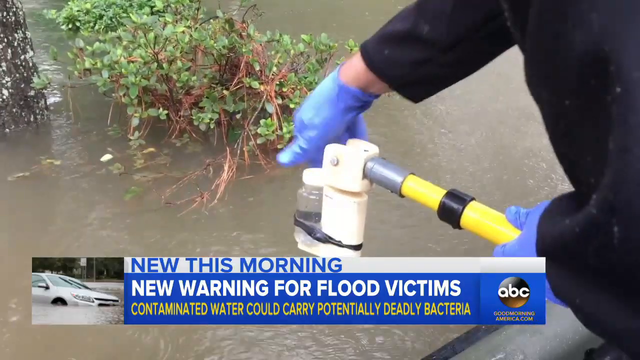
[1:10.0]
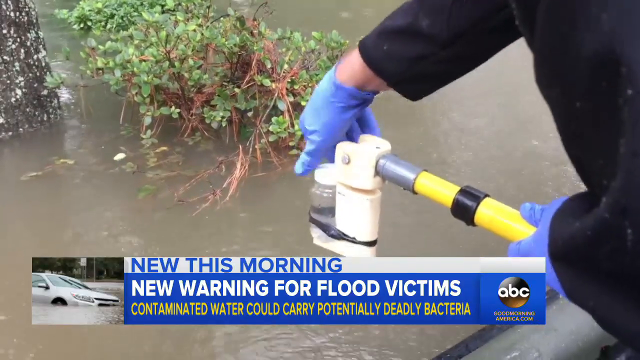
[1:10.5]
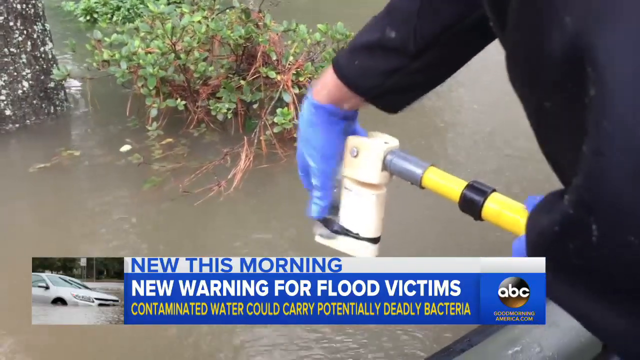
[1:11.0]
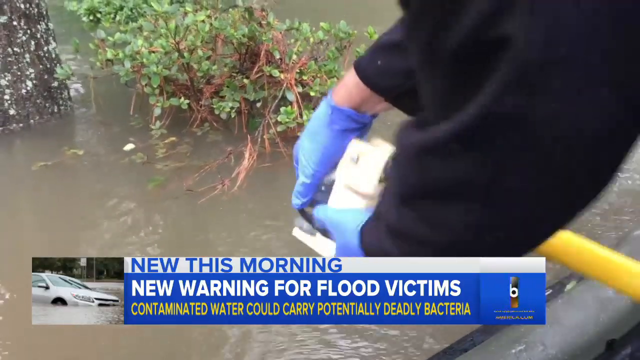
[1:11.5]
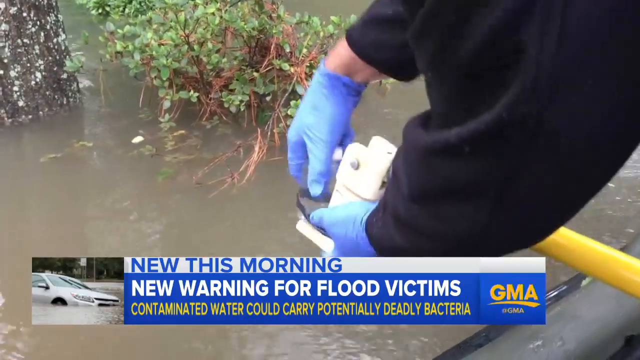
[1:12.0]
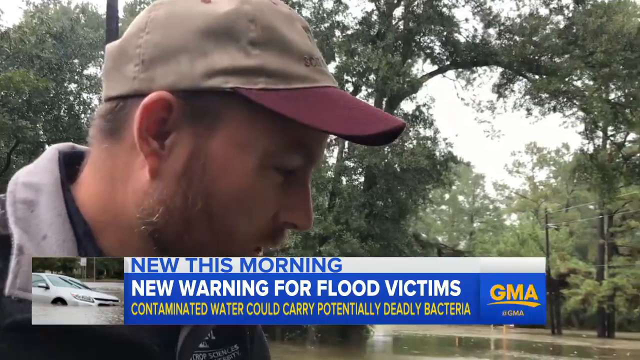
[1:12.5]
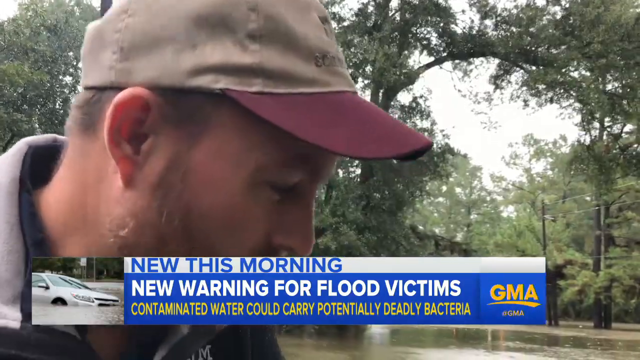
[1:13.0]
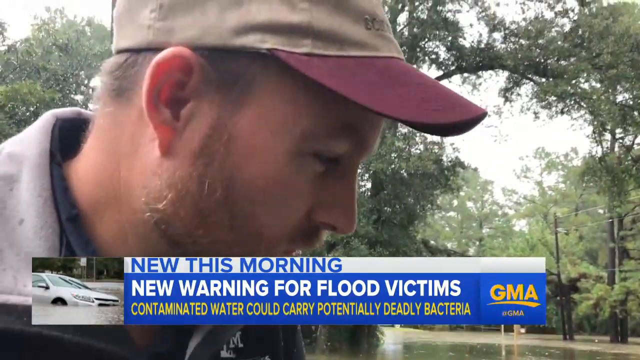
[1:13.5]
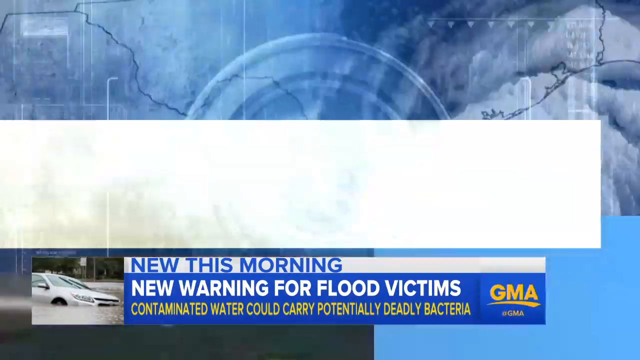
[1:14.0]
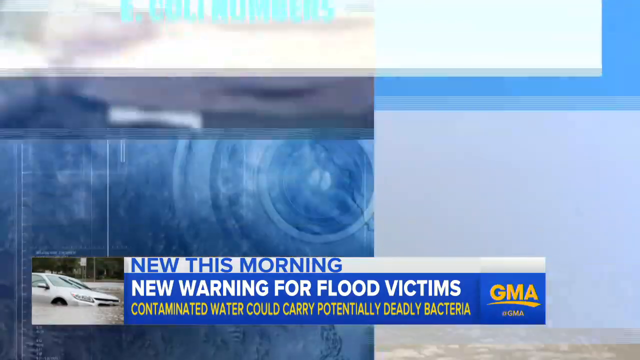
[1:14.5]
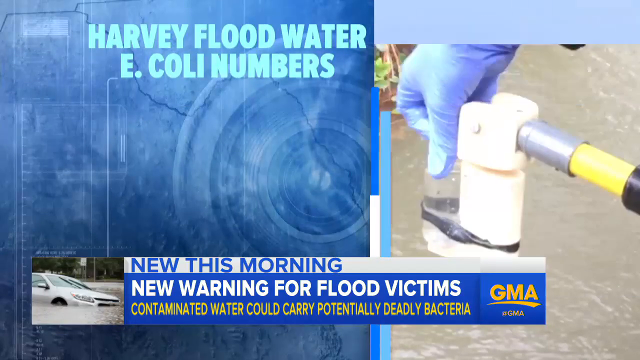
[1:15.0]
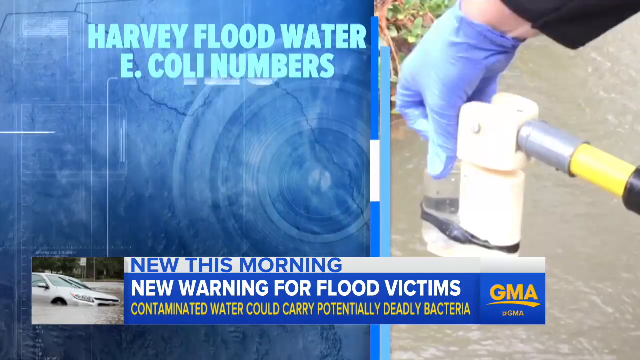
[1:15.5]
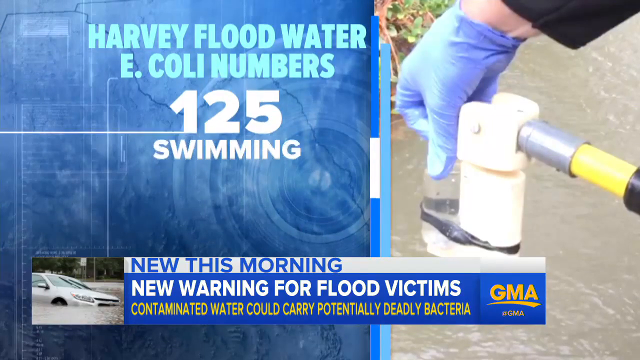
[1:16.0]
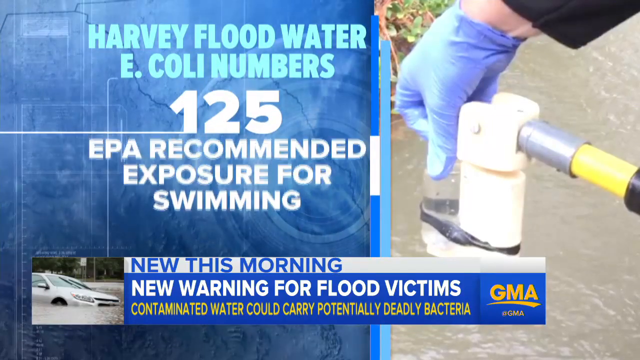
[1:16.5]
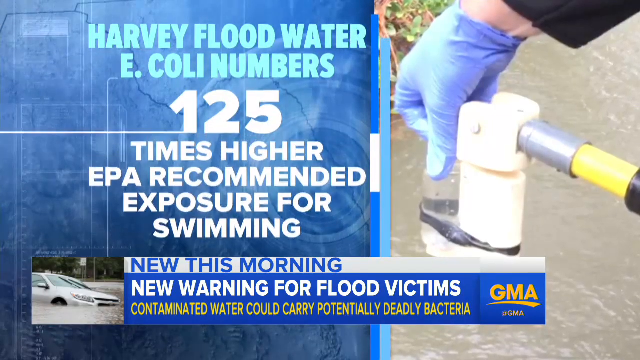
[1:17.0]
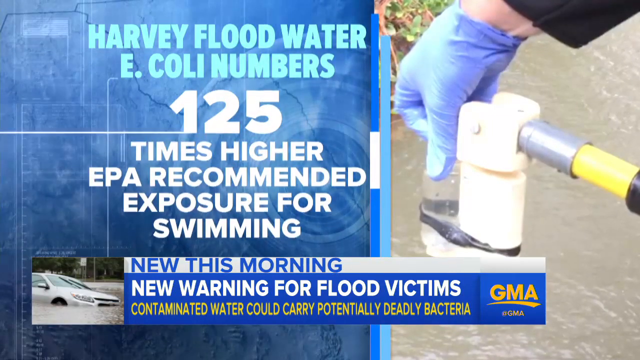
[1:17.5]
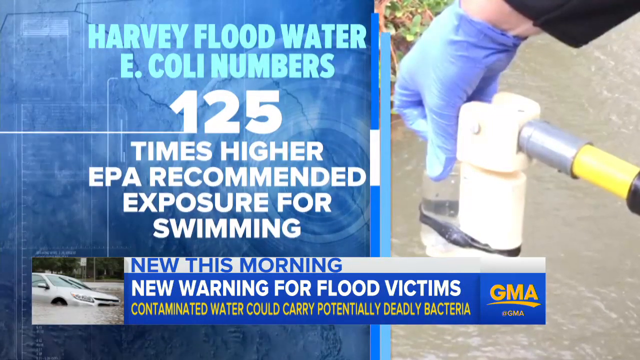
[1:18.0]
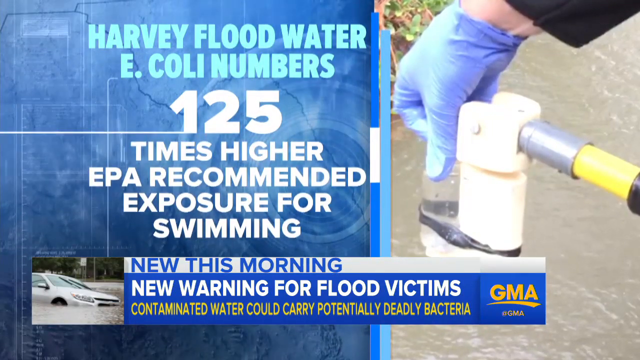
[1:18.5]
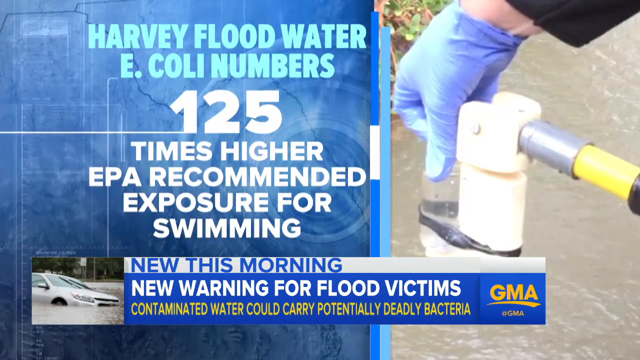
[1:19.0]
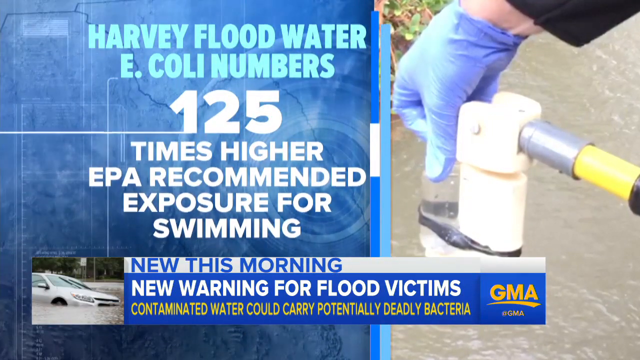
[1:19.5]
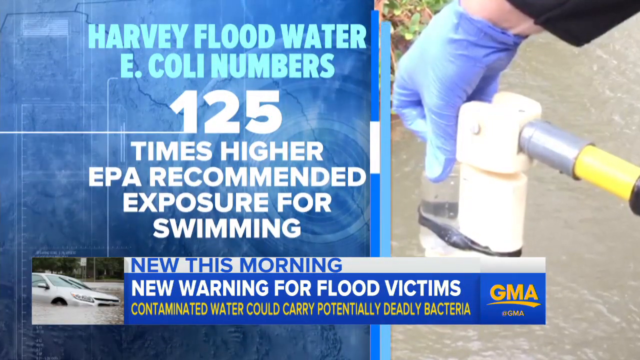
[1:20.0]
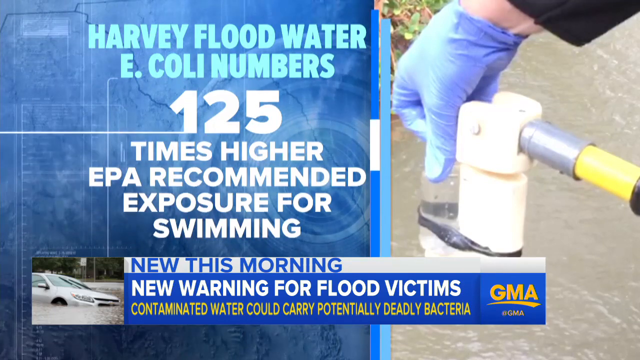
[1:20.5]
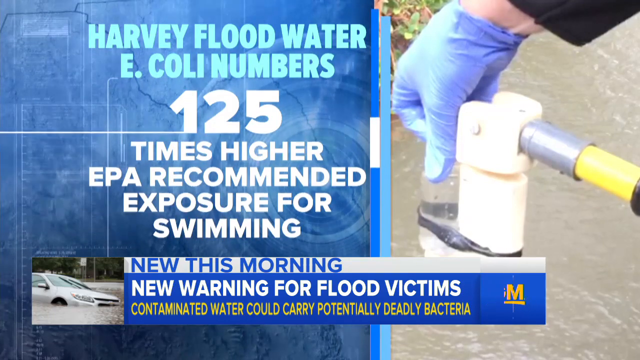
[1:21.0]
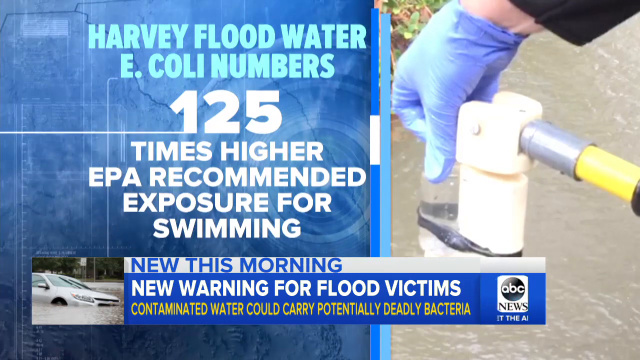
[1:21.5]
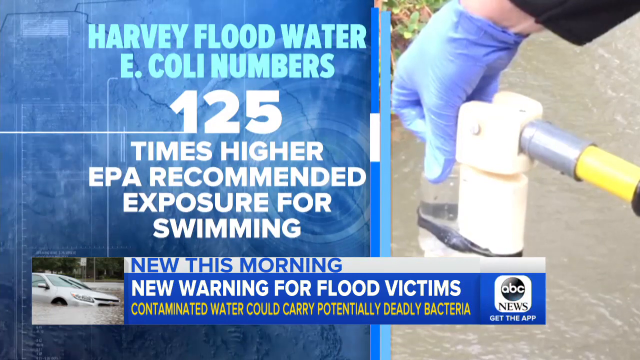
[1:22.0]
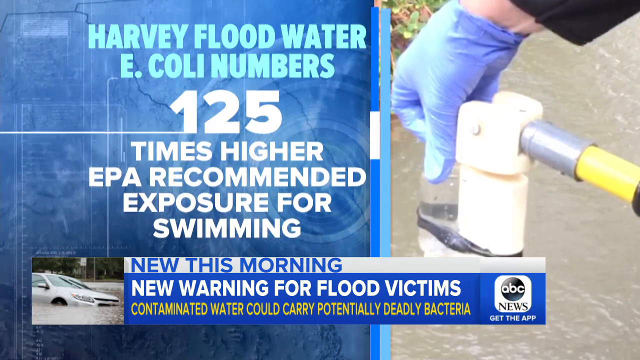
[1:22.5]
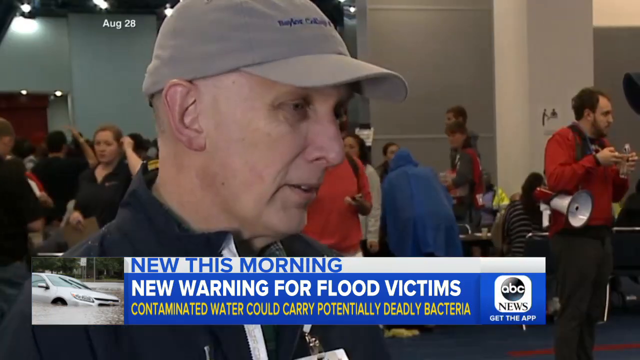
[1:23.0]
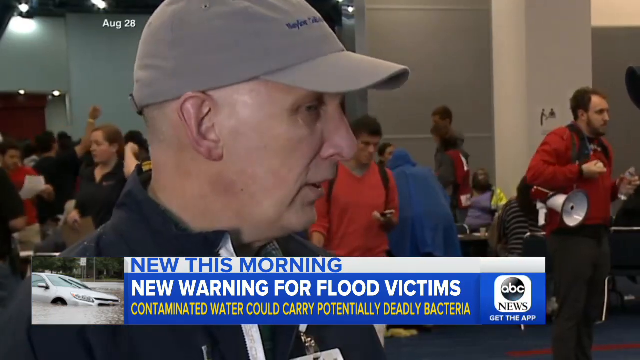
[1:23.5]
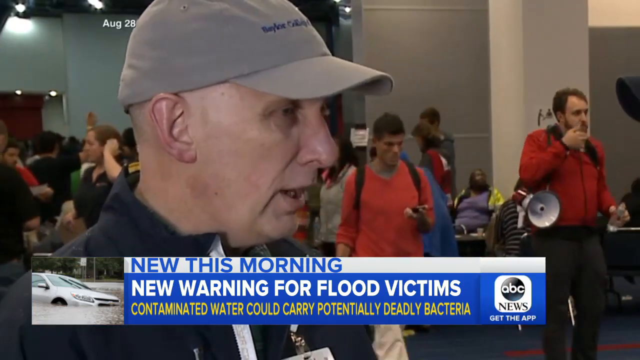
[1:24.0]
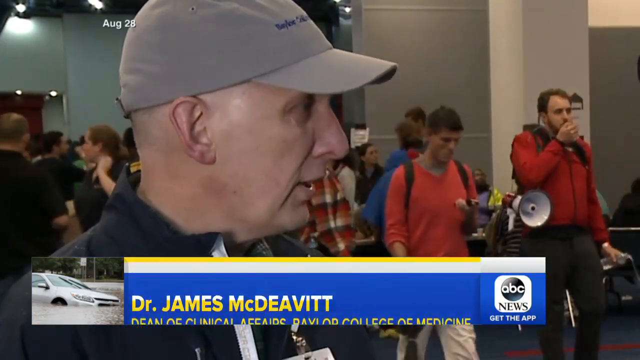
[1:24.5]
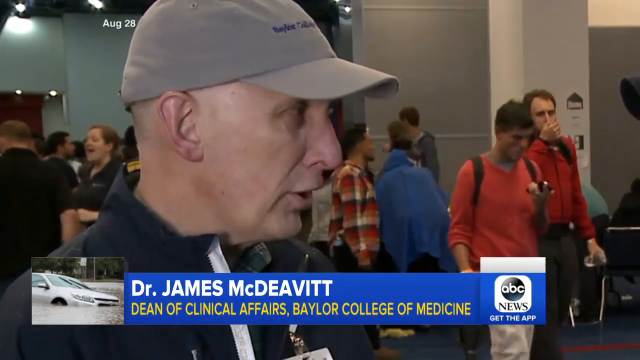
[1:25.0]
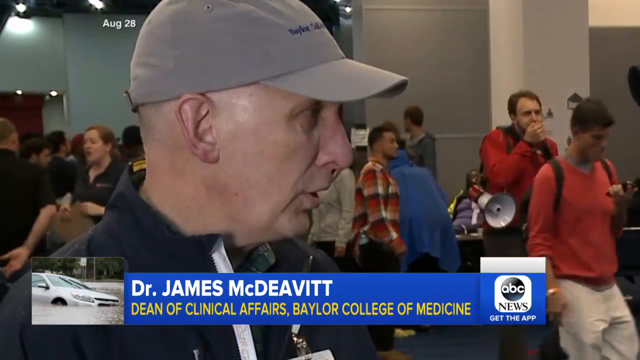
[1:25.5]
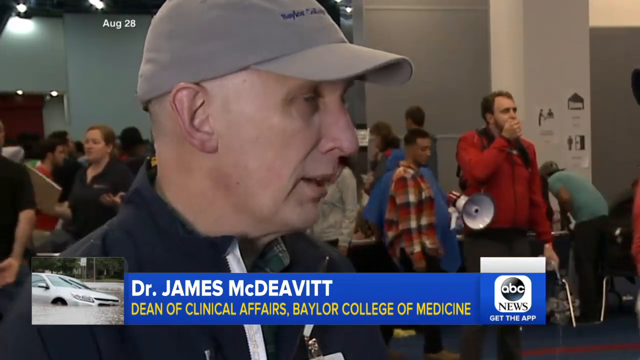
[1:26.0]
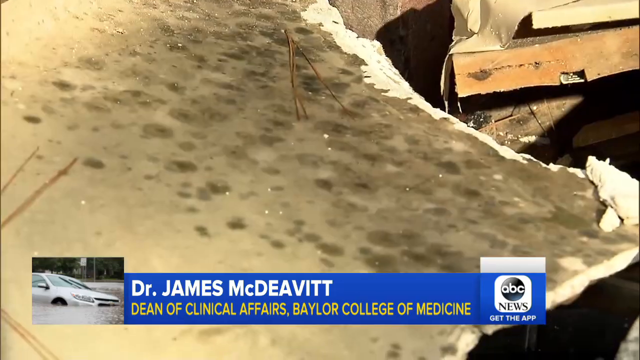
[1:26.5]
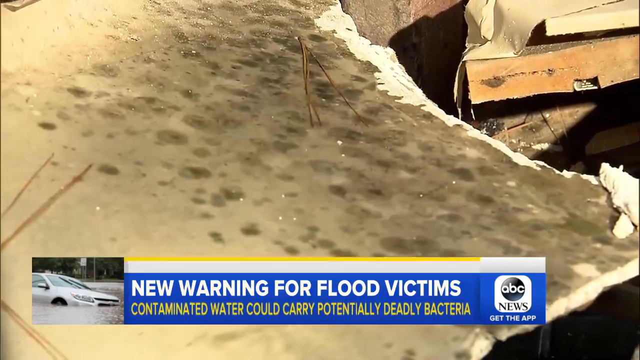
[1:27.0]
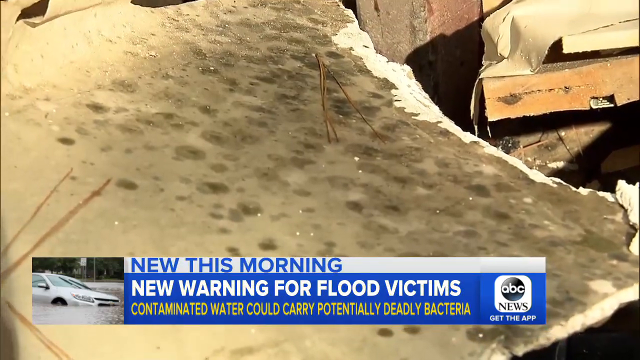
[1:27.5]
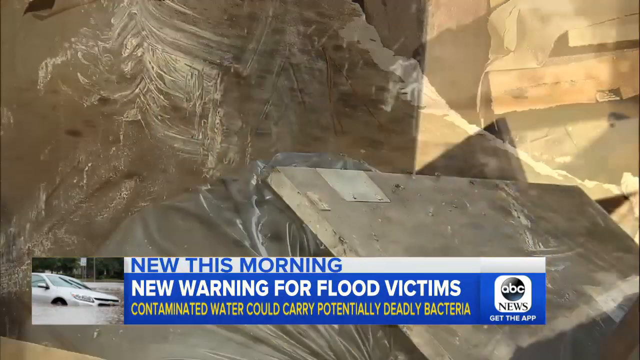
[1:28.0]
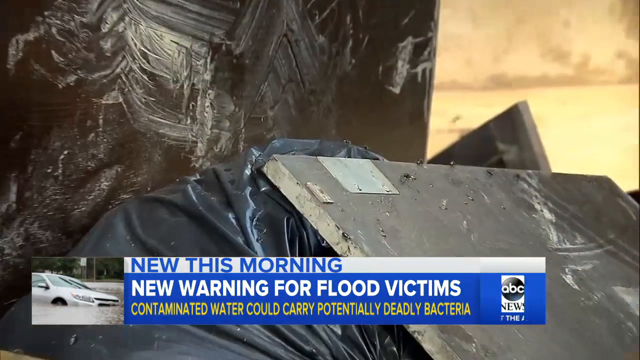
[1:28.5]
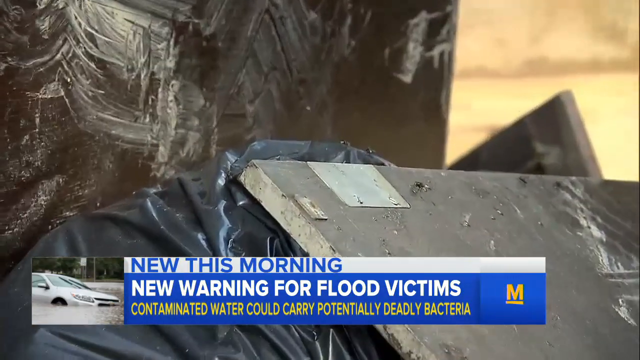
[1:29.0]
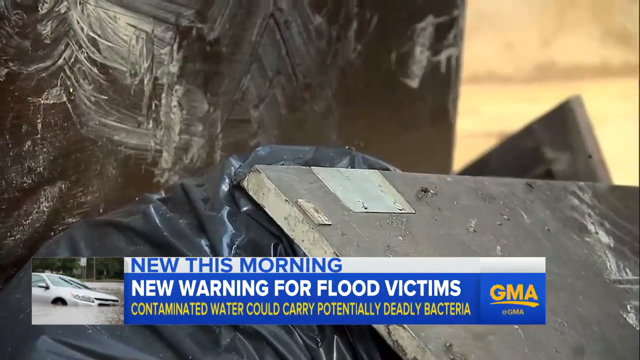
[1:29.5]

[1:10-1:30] This Good Morning America report concerns the possibility of floodwaters being contaminated with dangerous bacteria. It opens on a man standing in floodwaters holding what looks like a hose with a spray device on the end, with a small jar attached to the sprayer device. The screen changes to show a closeup of his hand and the device on the right side, while text on the left side says, "Harvey floodwater E. coli numbers 125 times higher, EPA recommended exposure for swimming." The scene then switches to a man being interviewed by someone off-camera, filmed from the side. He appears to be in a crowded room, with people milling behind him. A text bar at the bottom of the screen identifies him as "Dr. James McDeavitt, Dean of Clinical Affairs, Baylor College of Medicine." Multiple shots follow of debris in a residential area after a flood.